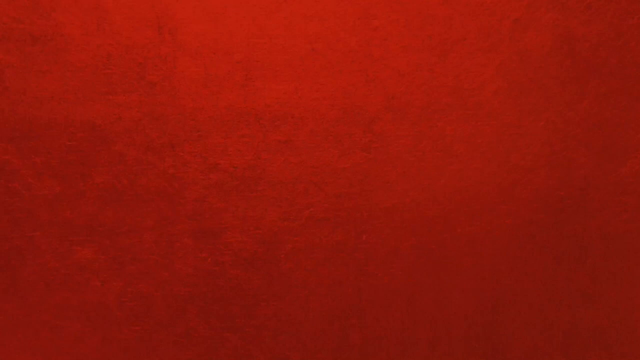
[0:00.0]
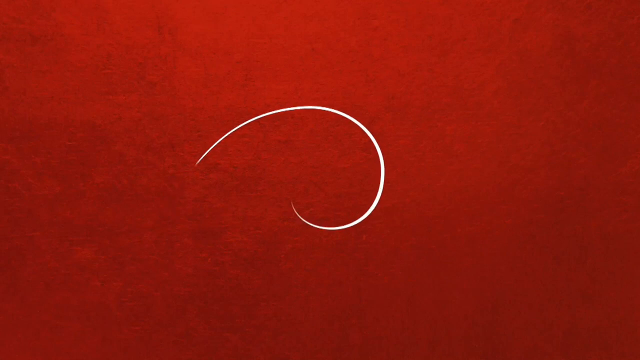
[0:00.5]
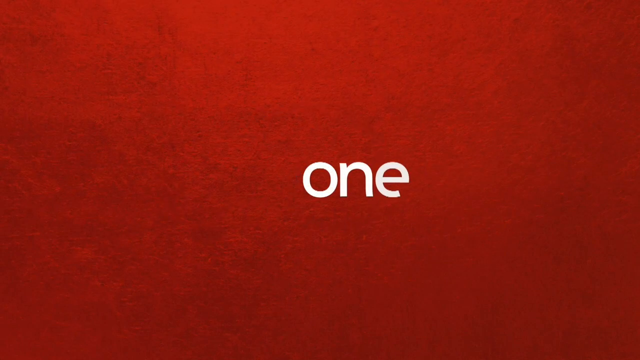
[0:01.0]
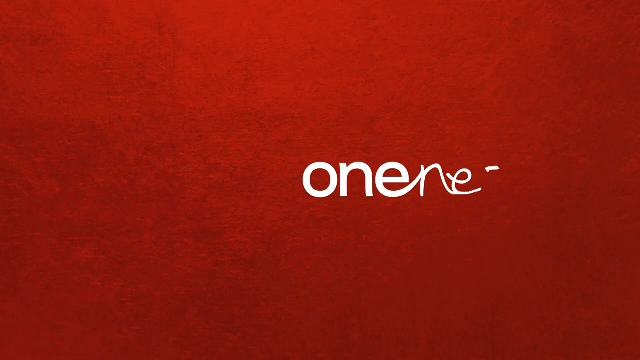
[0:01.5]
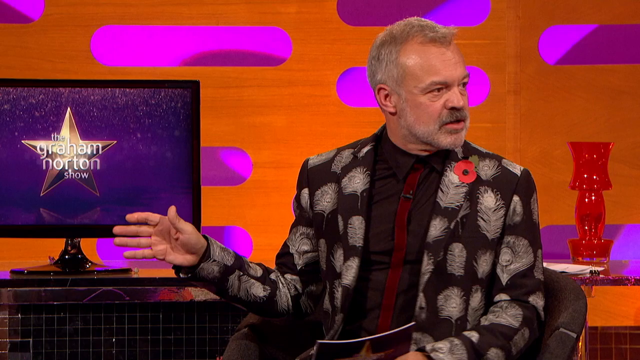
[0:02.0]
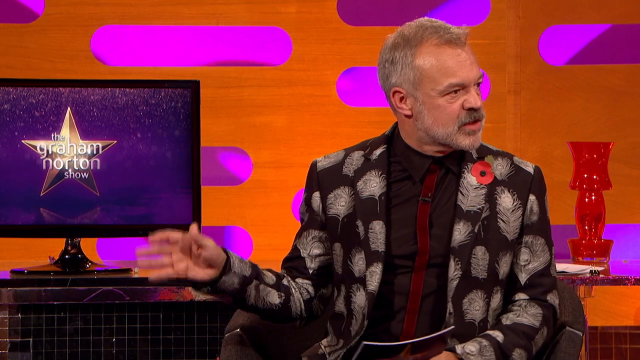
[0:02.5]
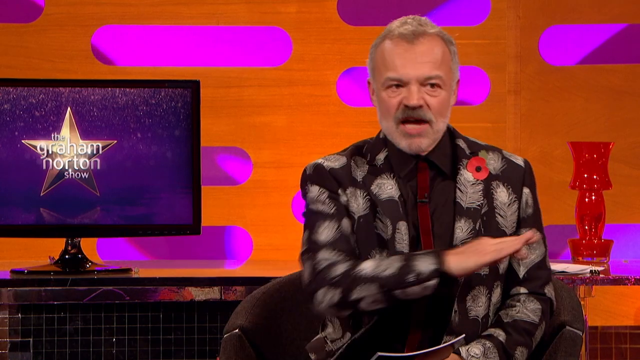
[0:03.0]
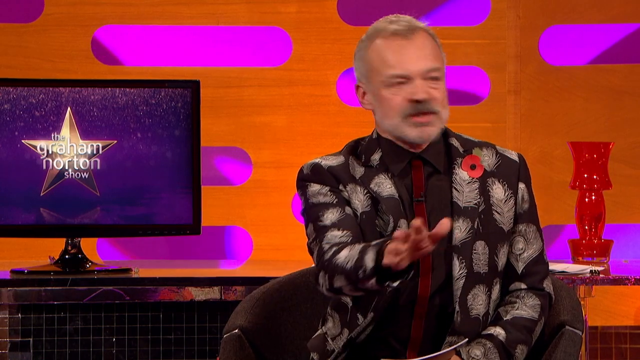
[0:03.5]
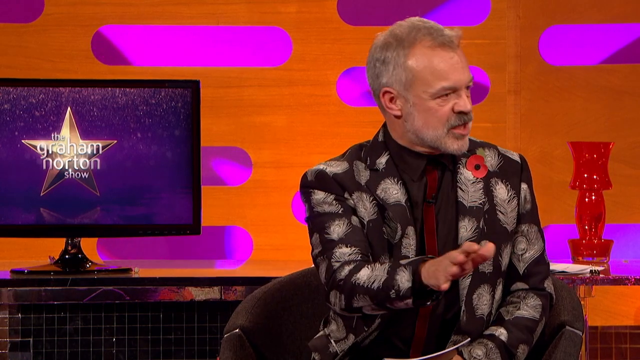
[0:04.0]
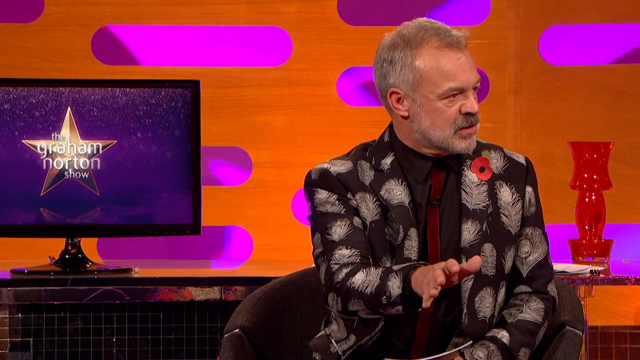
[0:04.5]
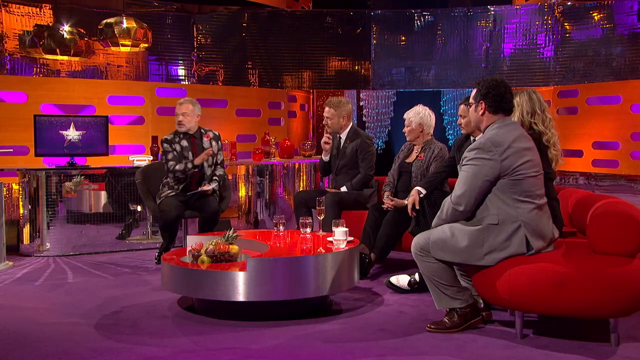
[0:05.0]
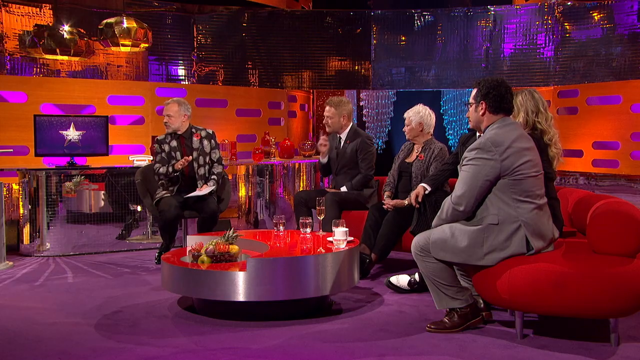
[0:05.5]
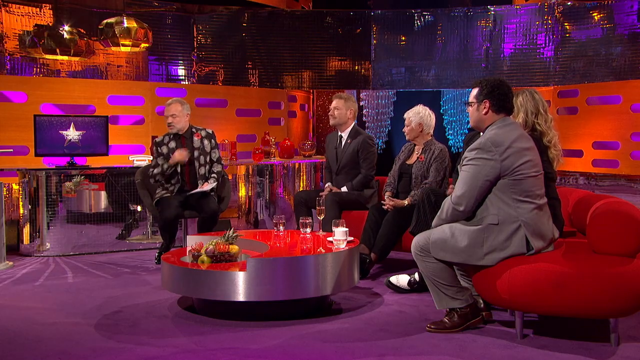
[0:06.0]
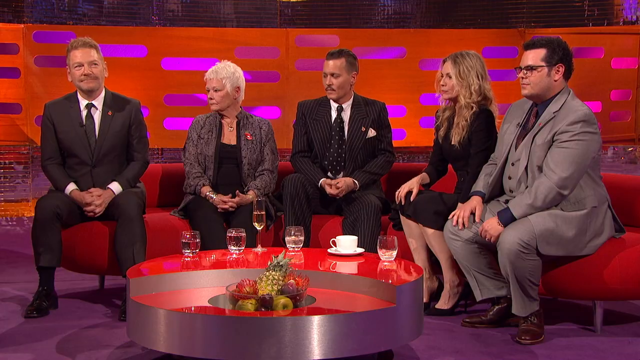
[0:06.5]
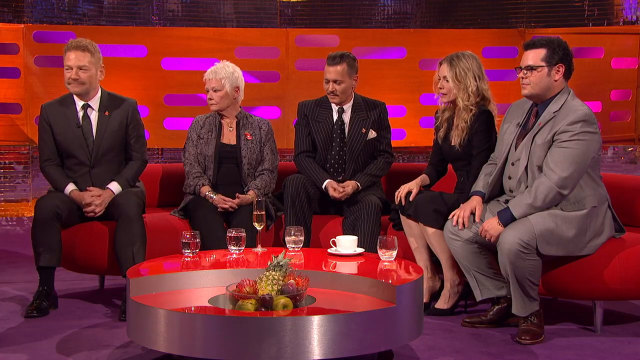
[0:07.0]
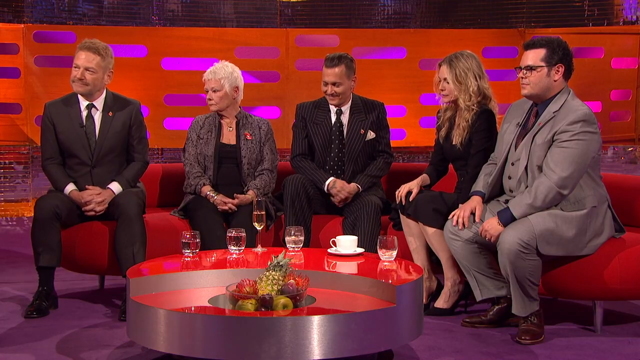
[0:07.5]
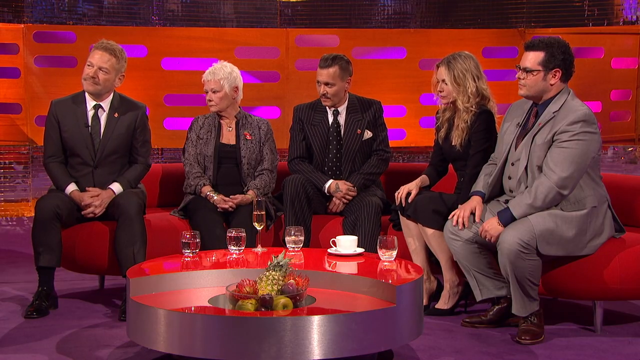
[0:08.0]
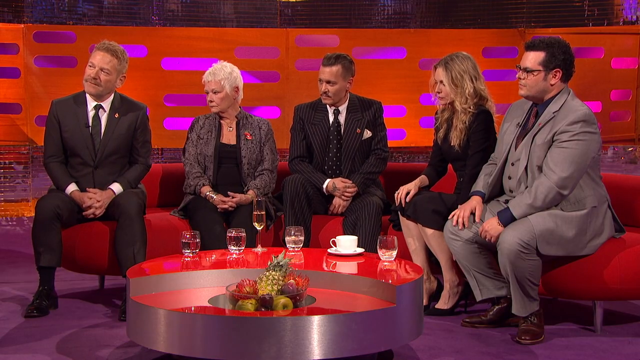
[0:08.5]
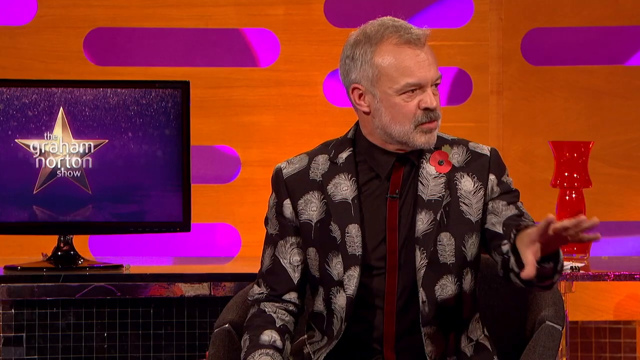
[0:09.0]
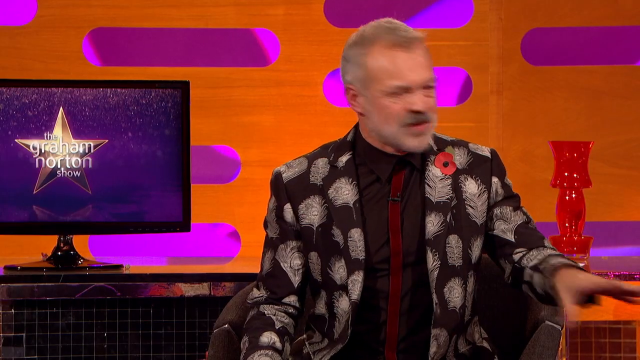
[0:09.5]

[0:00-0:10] The video opens on a red background with the word "oneness." It then shows a man in a black suit with a red tie and a black coat with white feathers on it, with something red, maybe a flower, at the top of his collar. He faces a group of people, looking toward them as he speaks and moves his right hand. Five other people sit on a red couch. Johnny Depp is in the middle, and to his left is an older woman with white hair who is known from the James Bond movies; the other people are unidentified. Six cups are on the table: four glasses of water, one tea cup, and one cup most likely of champagne, along with a basket of fruit. Johnny Depp seems to smile a bit.